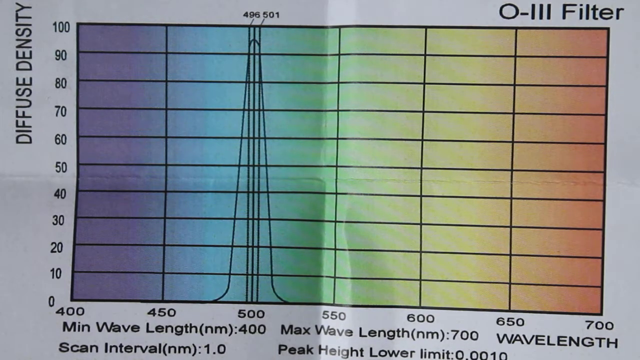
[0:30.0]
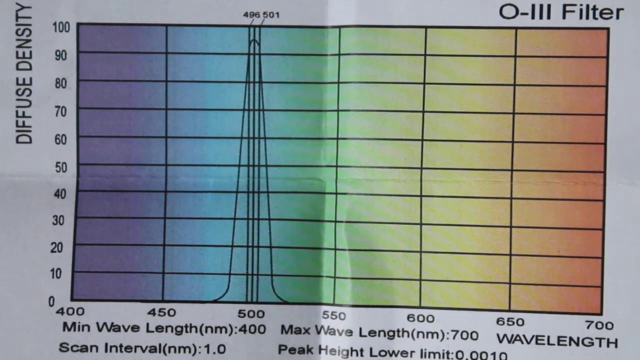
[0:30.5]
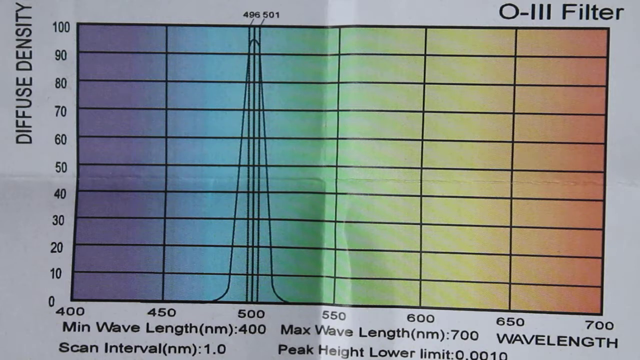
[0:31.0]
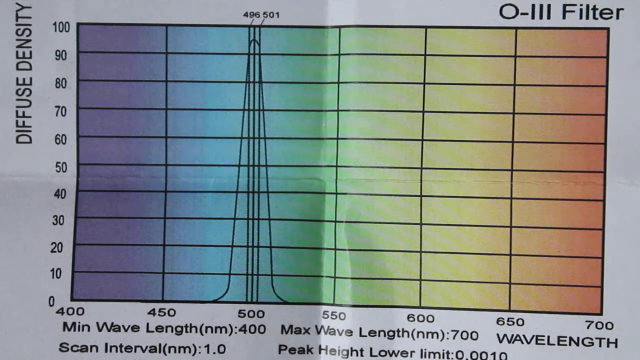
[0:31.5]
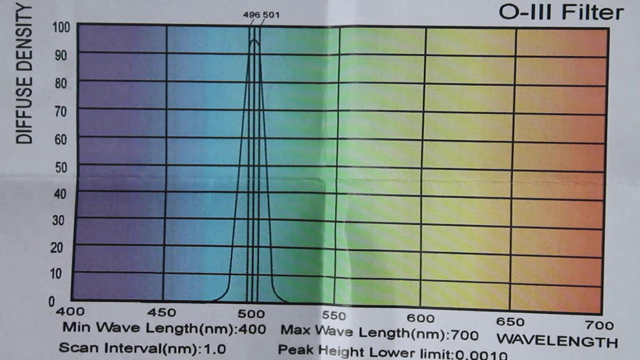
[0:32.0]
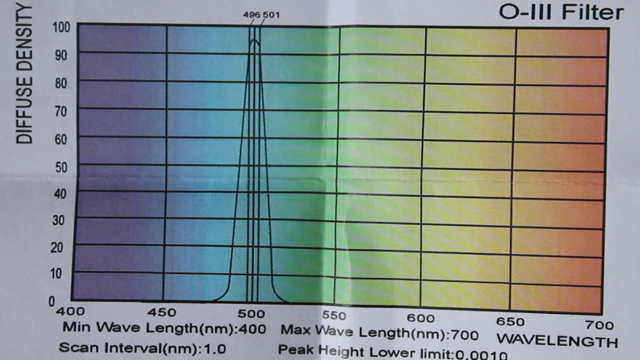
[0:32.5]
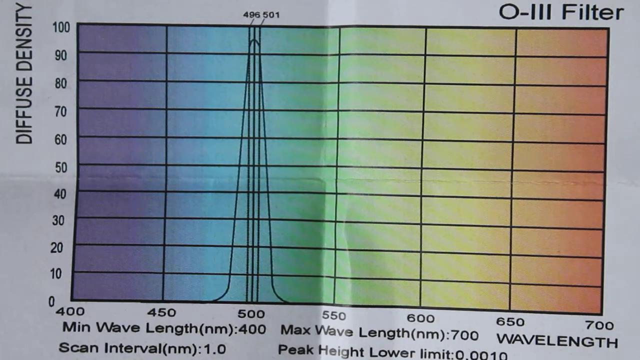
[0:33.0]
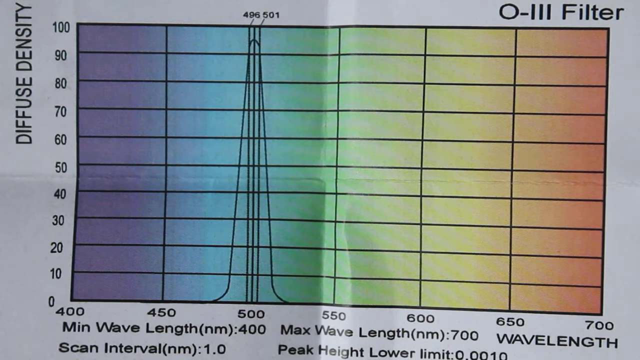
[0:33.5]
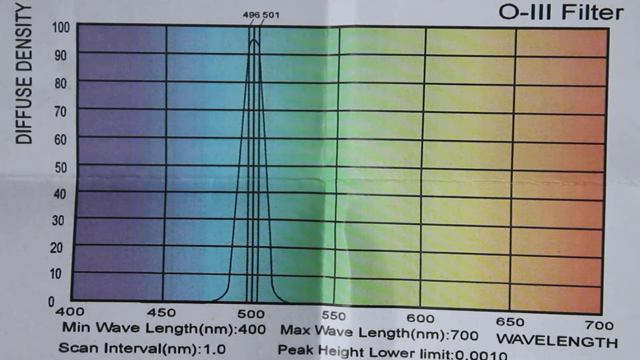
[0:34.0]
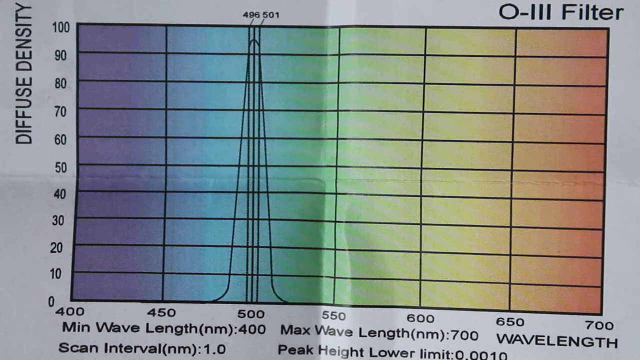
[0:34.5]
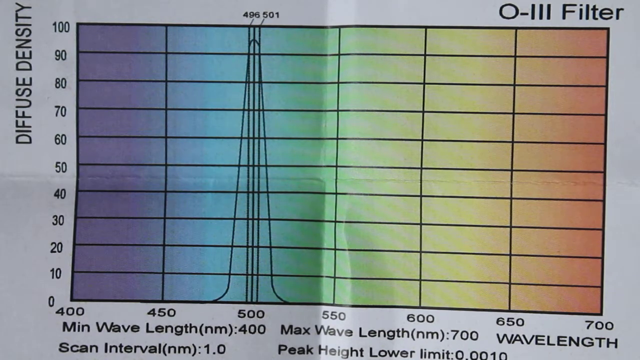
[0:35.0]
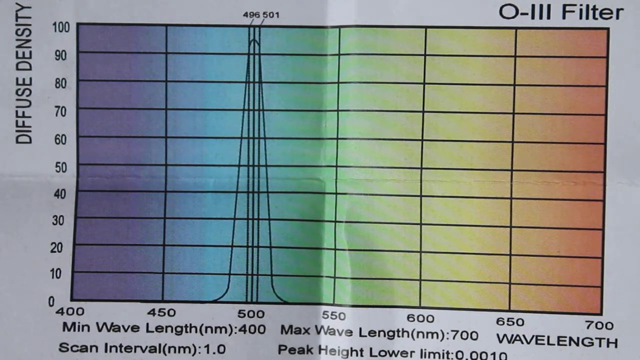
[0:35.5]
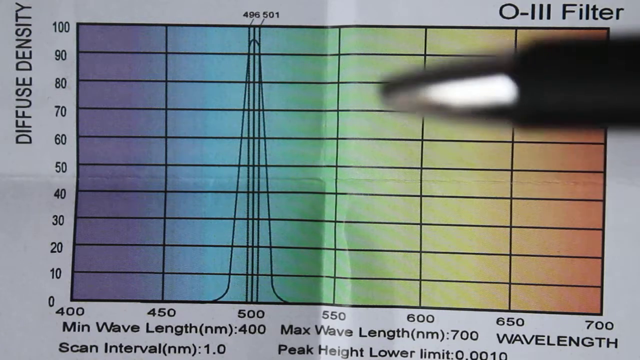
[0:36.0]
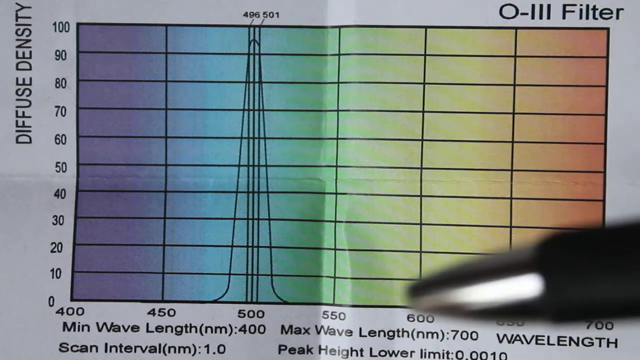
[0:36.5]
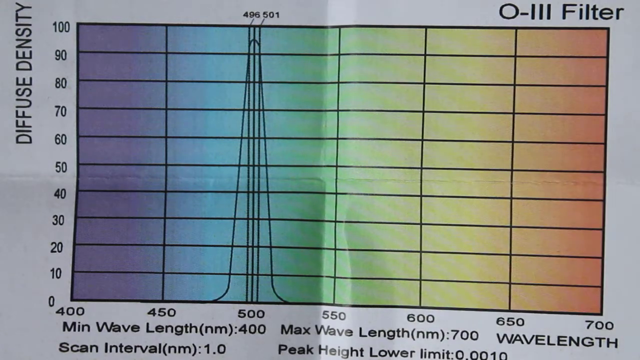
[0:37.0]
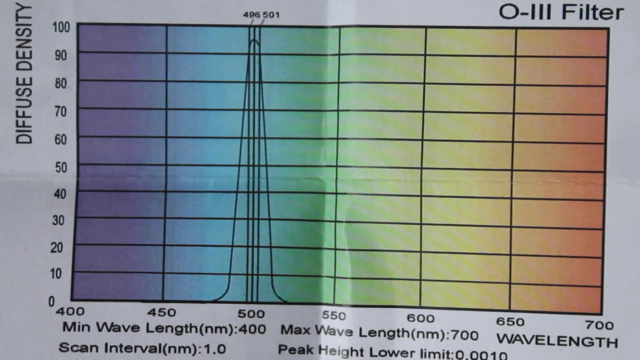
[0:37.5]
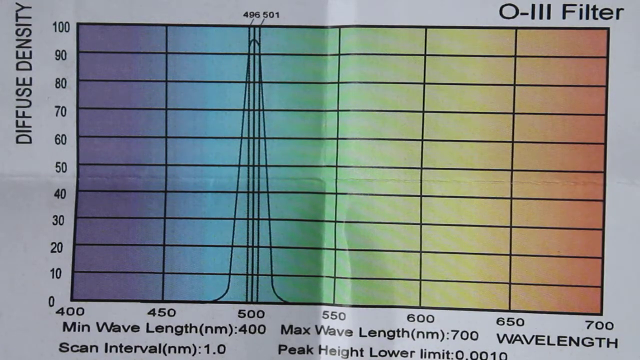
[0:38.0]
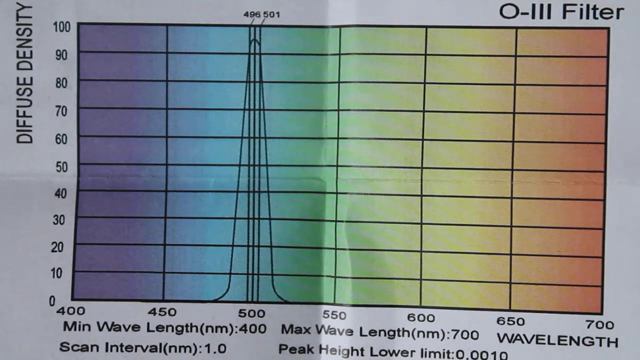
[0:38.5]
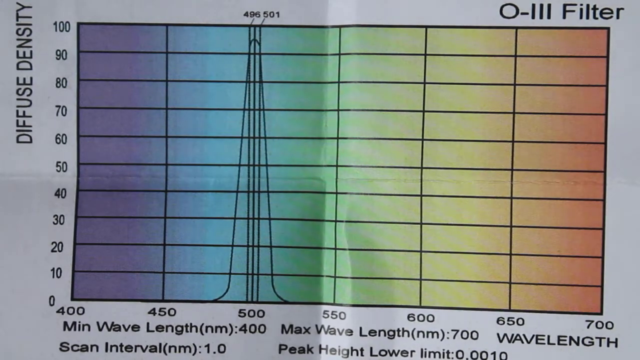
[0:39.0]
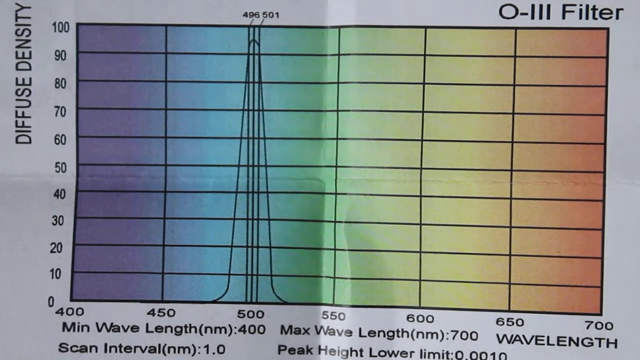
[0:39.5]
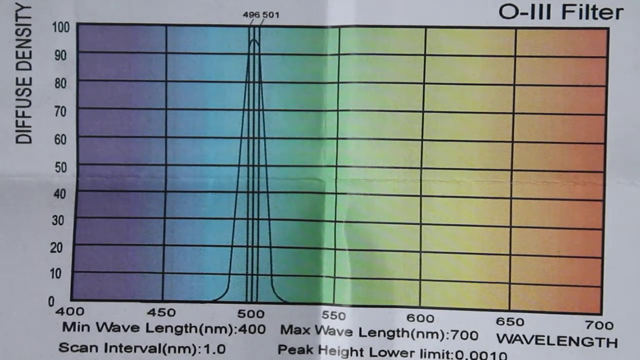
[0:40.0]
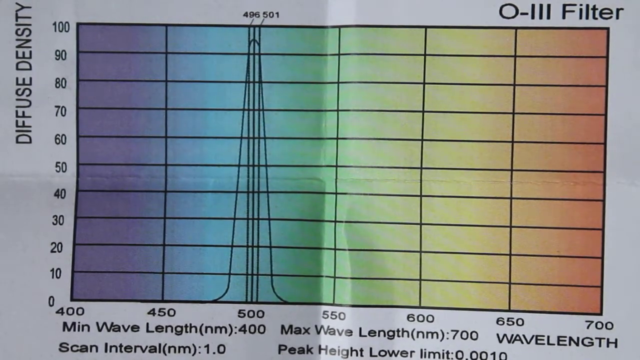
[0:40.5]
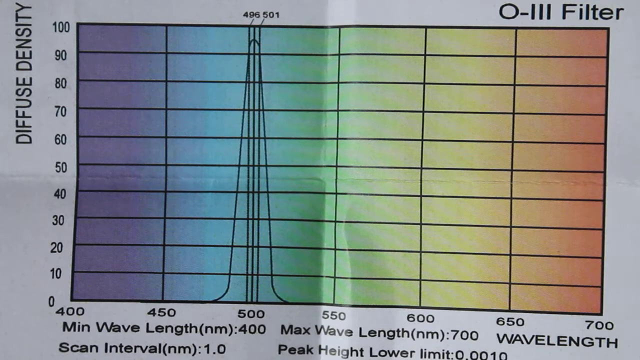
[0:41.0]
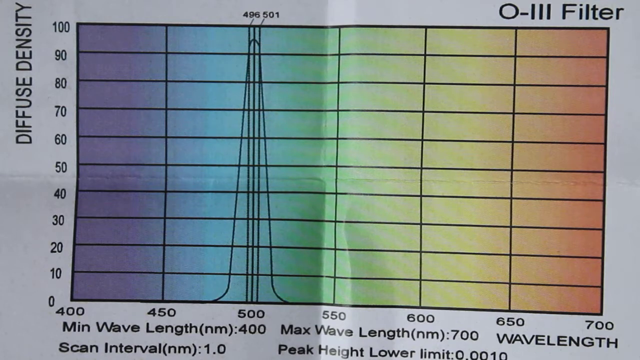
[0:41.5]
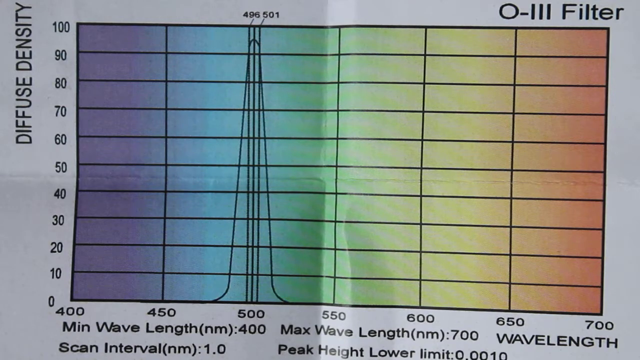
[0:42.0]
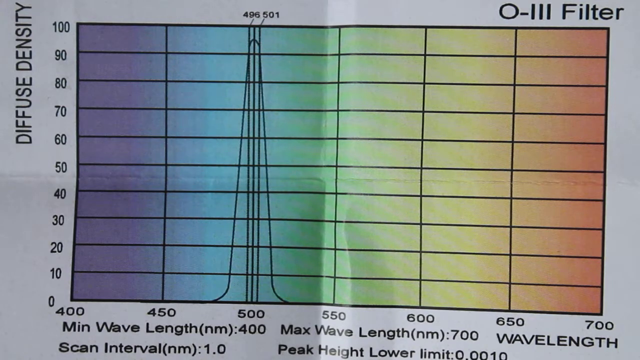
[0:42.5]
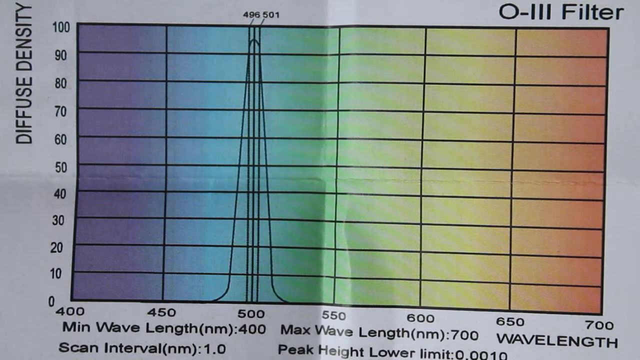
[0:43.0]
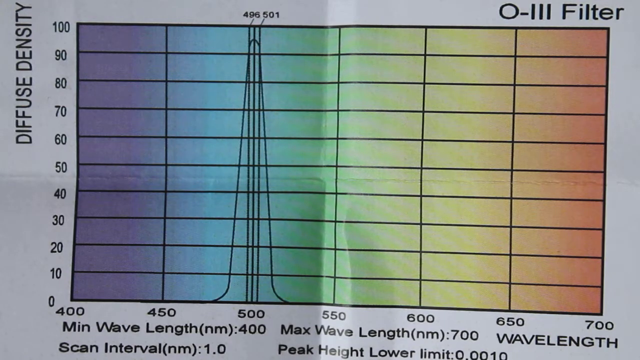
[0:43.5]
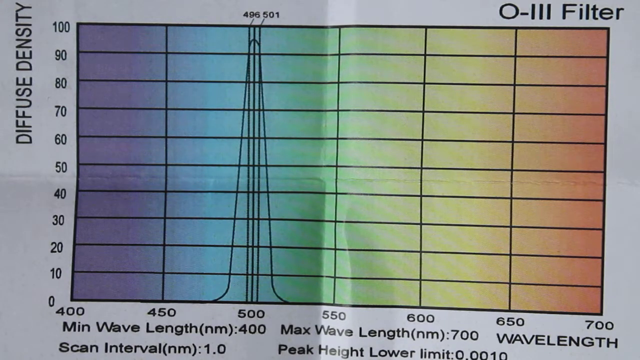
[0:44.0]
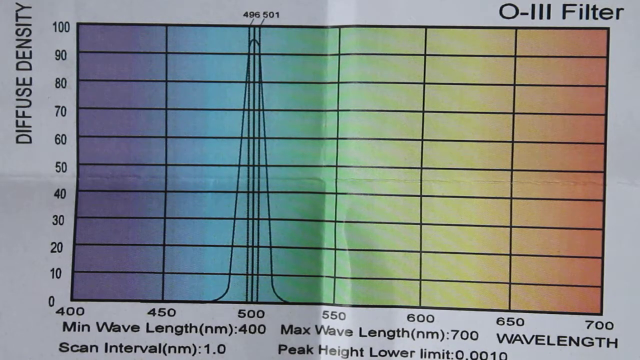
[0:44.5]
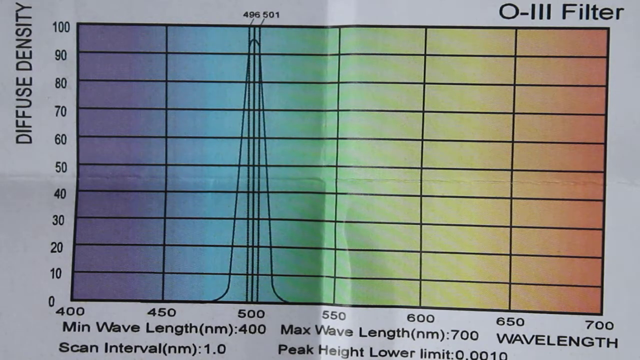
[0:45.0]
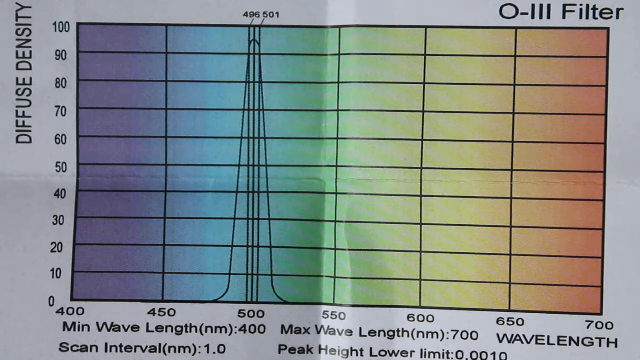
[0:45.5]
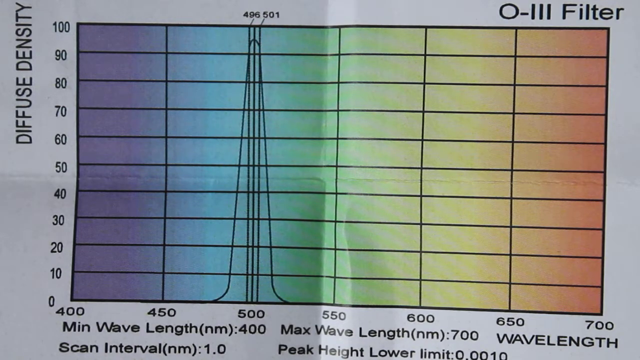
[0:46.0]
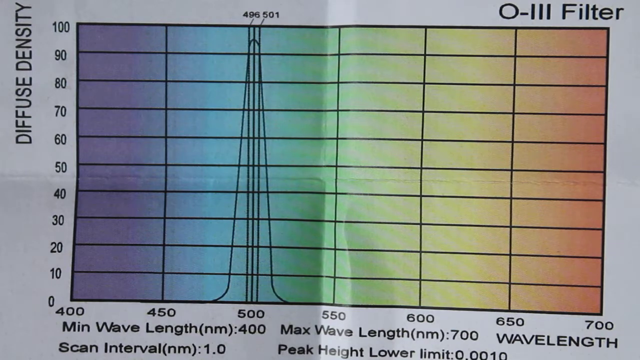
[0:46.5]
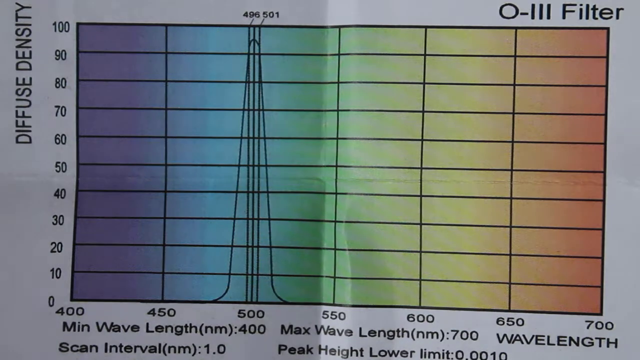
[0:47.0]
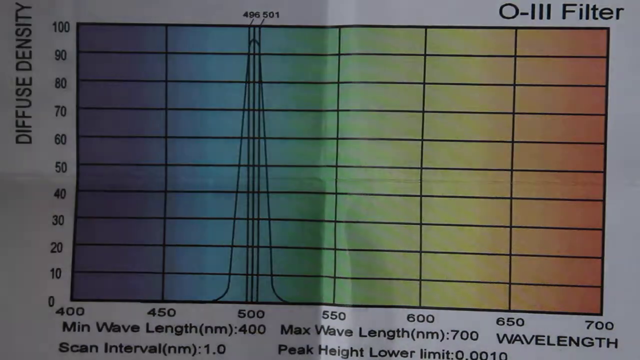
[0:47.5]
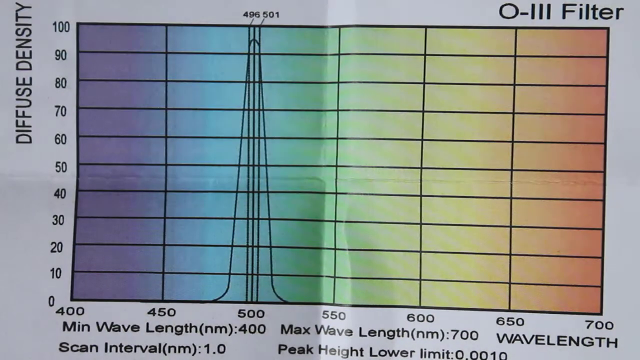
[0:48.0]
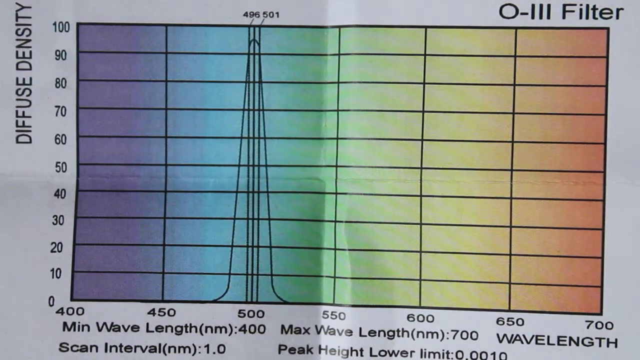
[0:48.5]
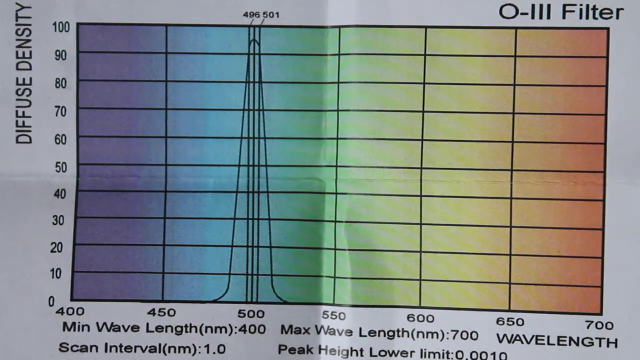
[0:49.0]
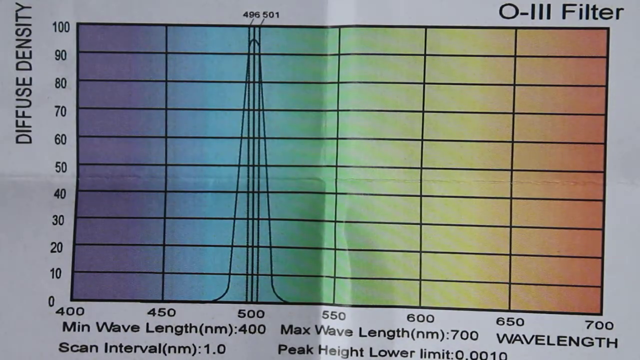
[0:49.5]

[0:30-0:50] The person continues pointing the pen at certain angles of the graph, which stays exactly the same. The upper right-hand corner says "O-LLL filter", the left side is labeled "diffuse density" from top to bottom with numbers from 0 to 100 in increments of 10, and the lower side shows the wavelength from left to right with numbers from 400 to 700 in increments of 50. The graph is in a variety of colors: the left side is mainly purple, blue, and green, while the right side is yellow and orange. Not much else happens. The video is rectangular in shape.